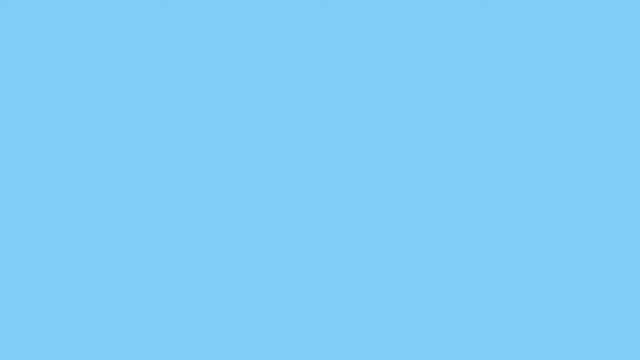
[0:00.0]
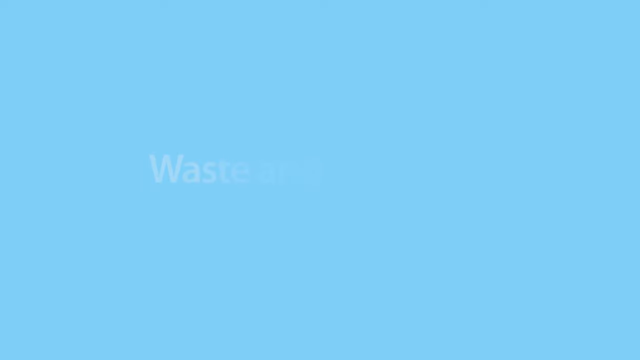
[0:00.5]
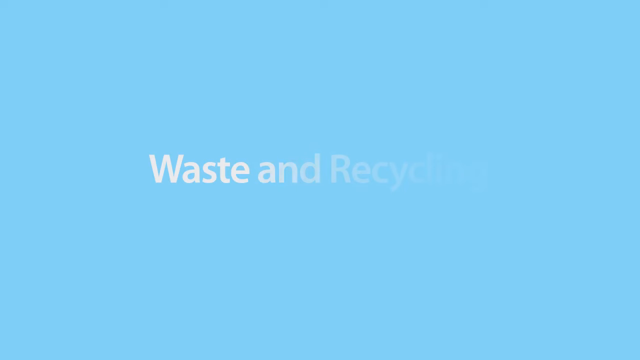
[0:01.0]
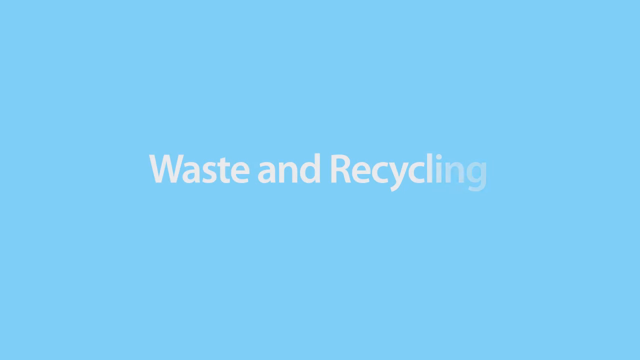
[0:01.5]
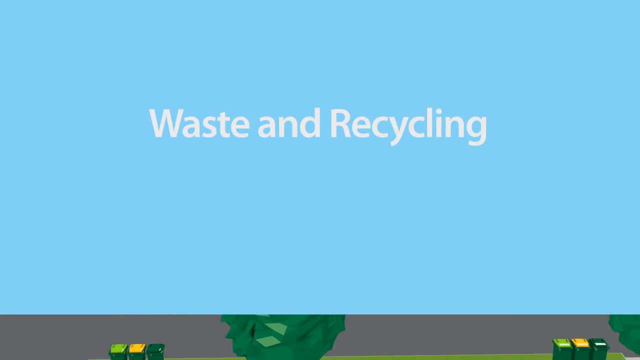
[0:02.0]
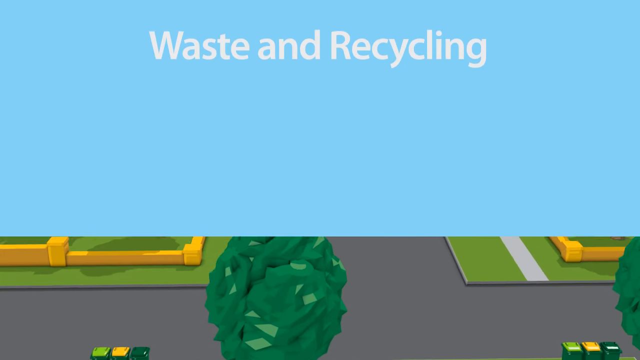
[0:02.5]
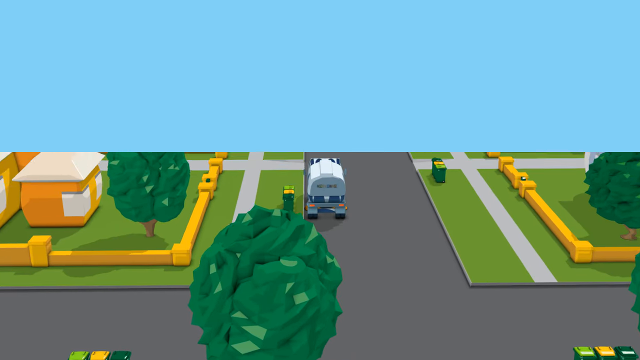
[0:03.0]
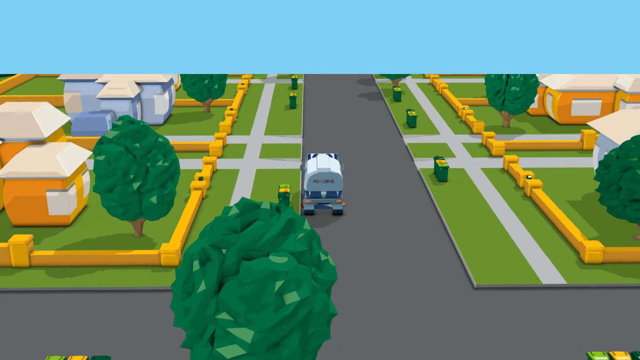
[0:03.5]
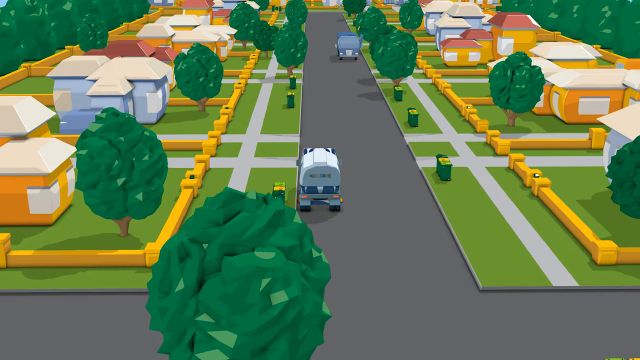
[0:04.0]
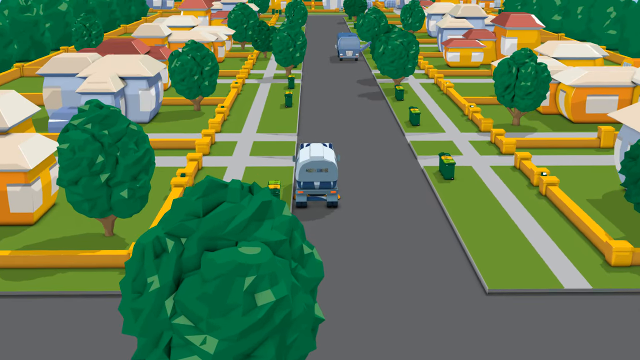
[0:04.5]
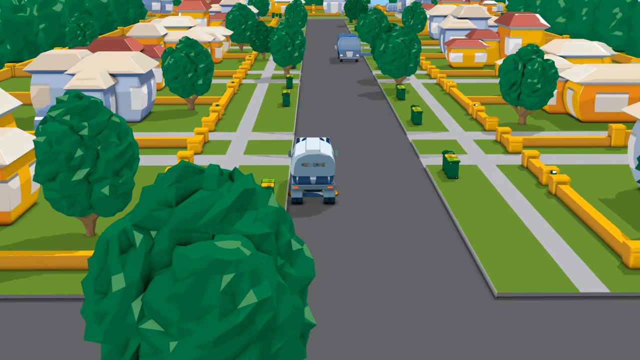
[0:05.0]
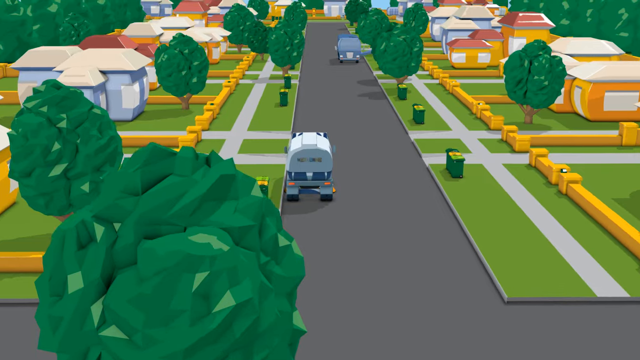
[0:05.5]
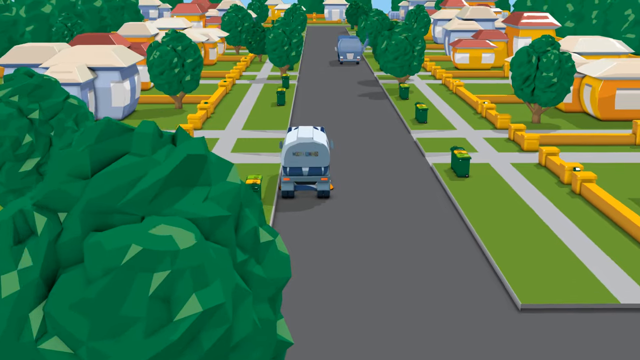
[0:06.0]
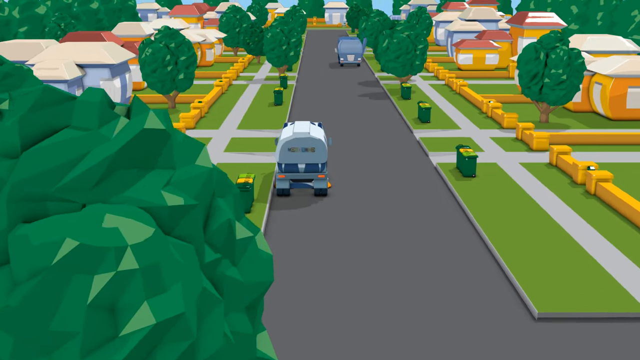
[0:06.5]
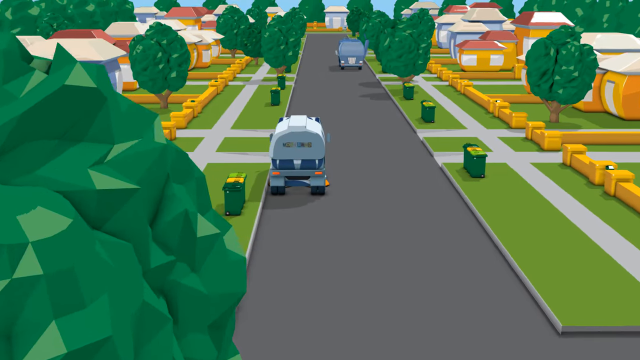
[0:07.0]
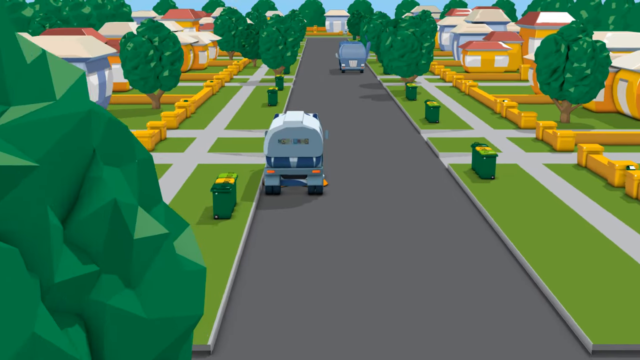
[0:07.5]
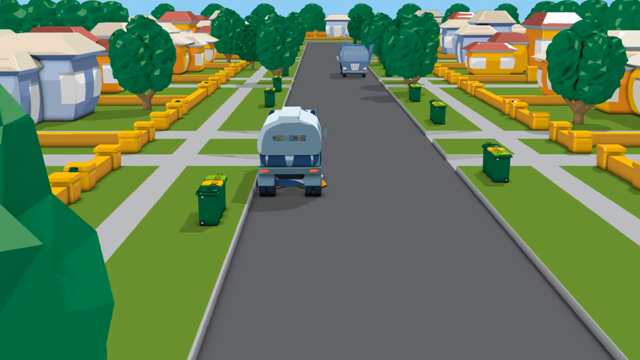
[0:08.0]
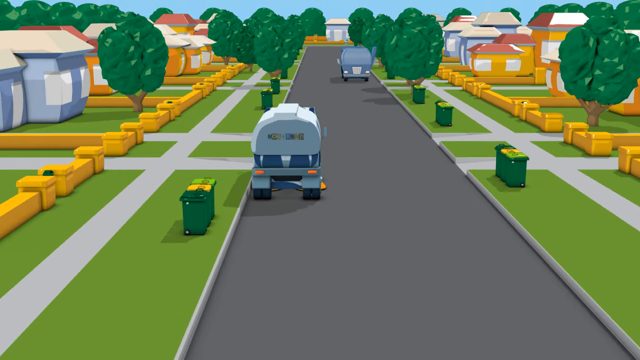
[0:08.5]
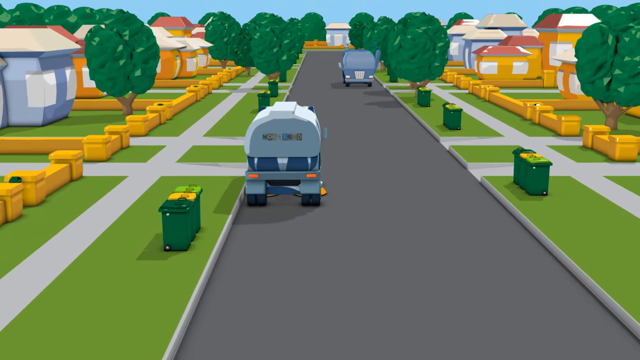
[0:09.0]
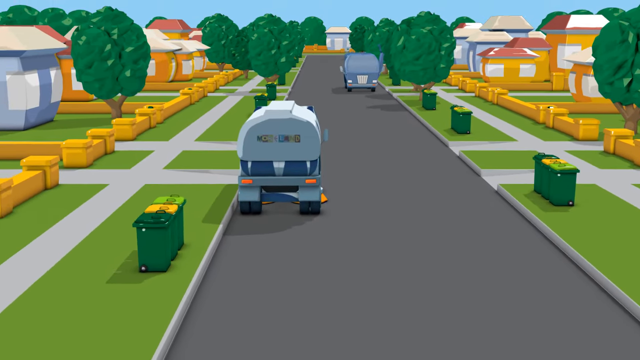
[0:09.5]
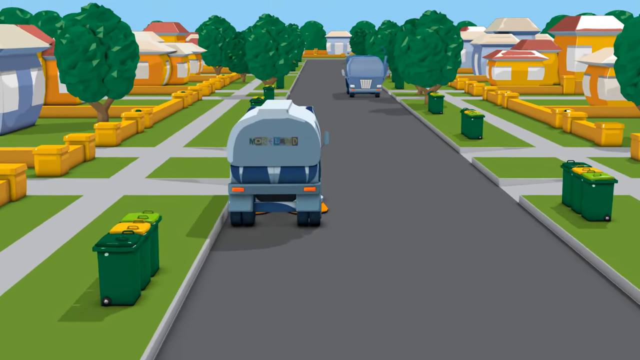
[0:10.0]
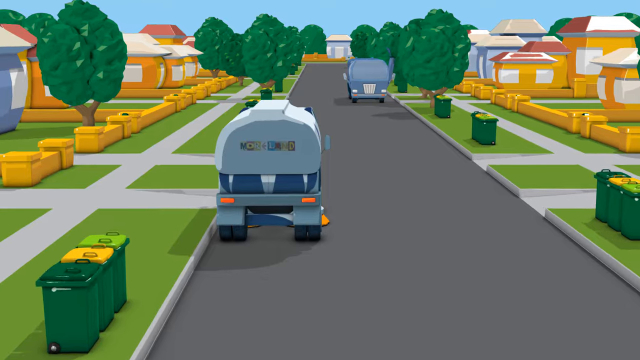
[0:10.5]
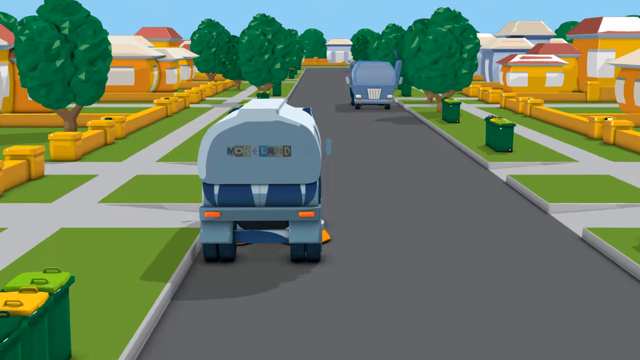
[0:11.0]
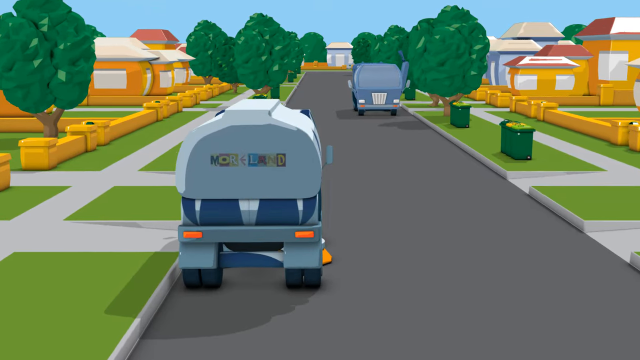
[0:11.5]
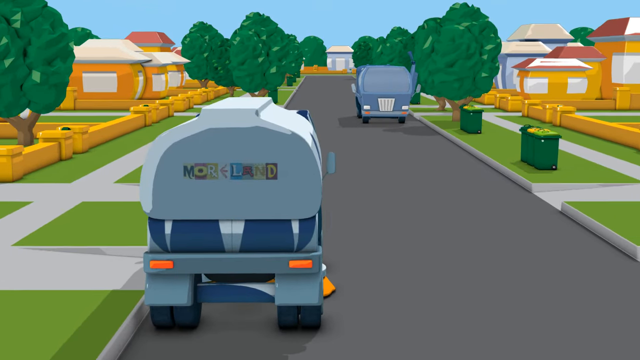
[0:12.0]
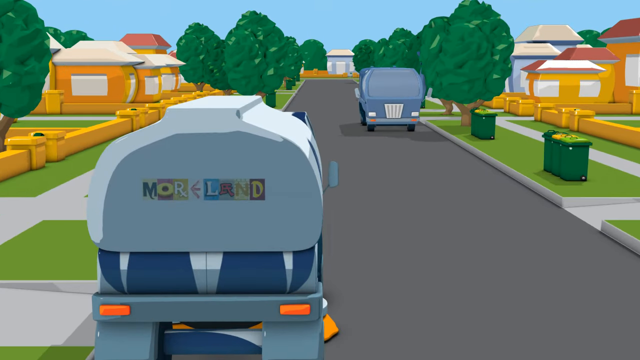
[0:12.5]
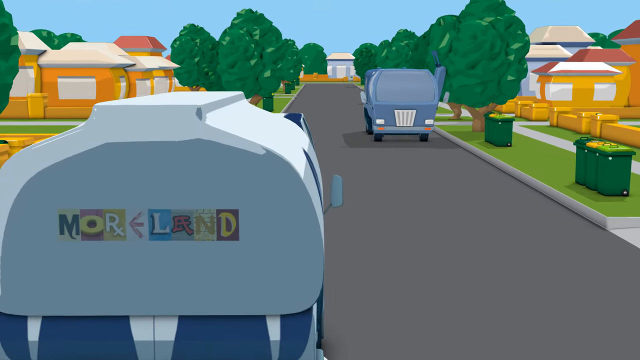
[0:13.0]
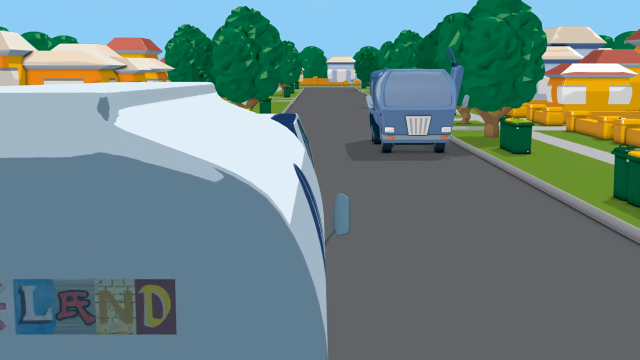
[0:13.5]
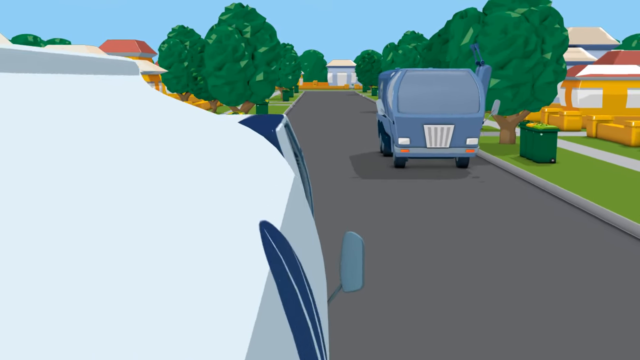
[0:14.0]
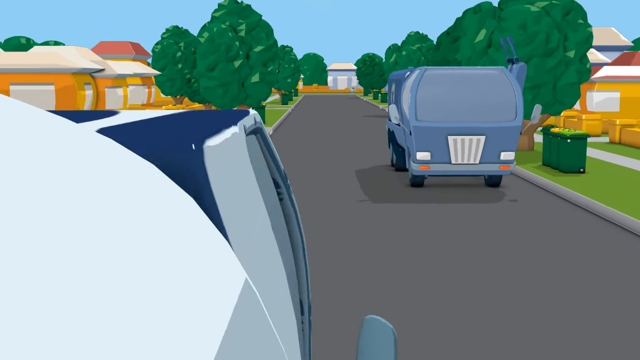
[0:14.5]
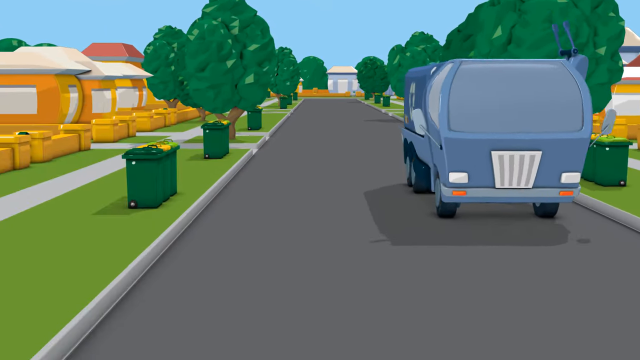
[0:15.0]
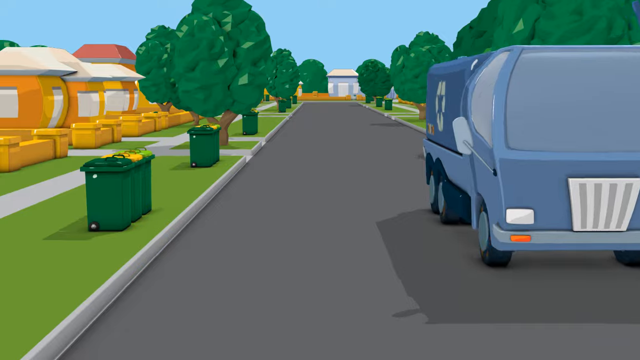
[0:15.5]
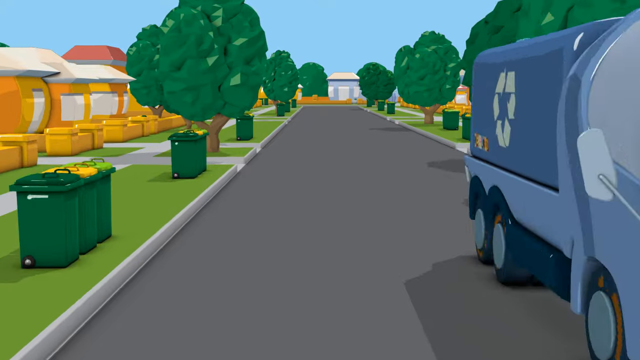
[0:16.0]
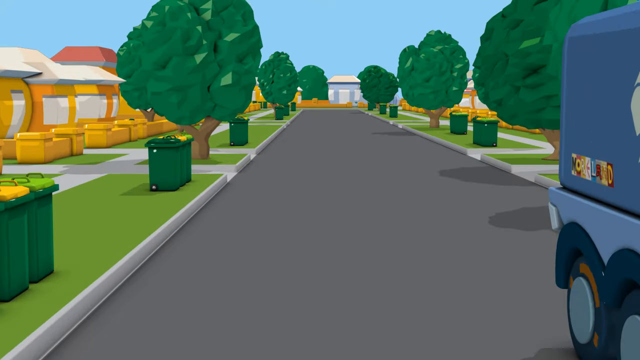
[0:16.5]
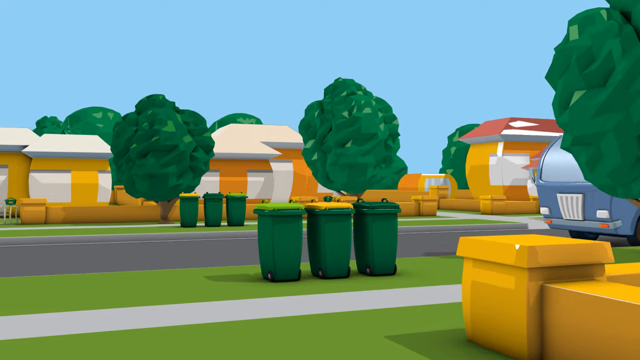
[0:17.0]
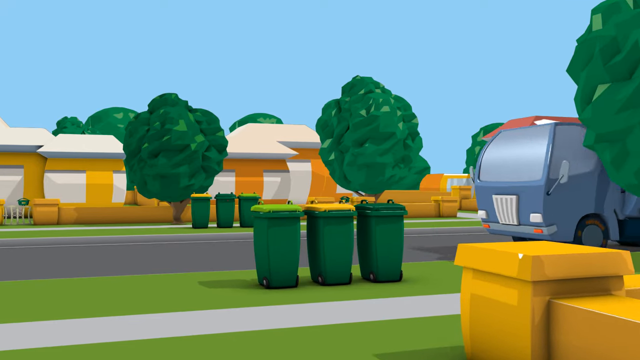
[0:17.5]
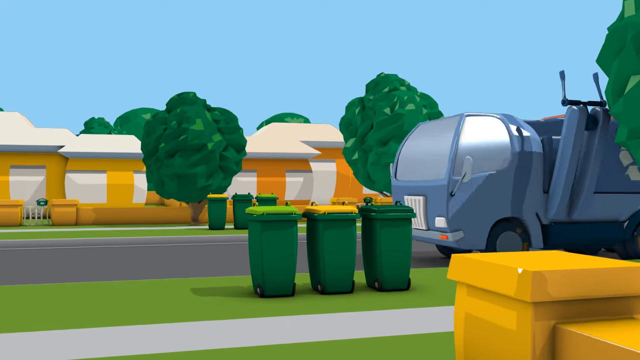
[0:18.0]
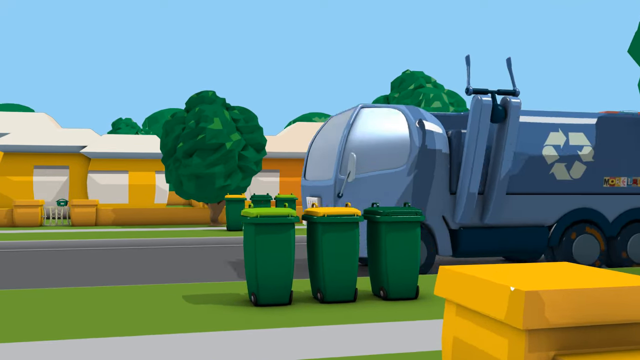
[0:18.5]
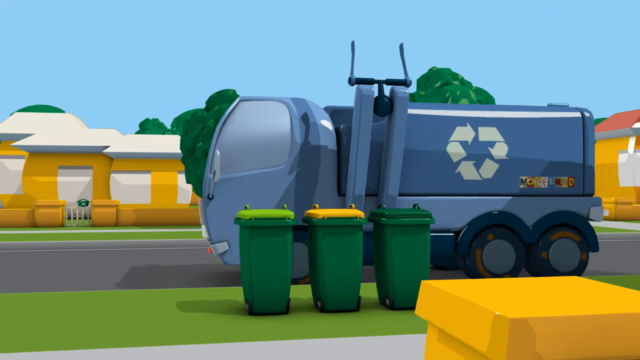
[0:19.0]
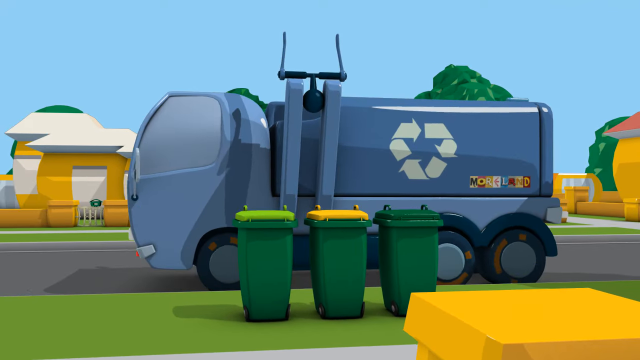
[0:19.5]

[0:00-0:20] The video opens on a light, sky-blue background that is black at the bottom. White lettering fades in reading "waste and recycling." An animated town follows, with a street down the middle and what look like garbage trucks, one on the left and one on the right. There are maybe five to ten houses on each side of the street, with trees on each property and what look like garbage or recycling cans near the sidewalk of each house. The camera zooms in toward the back of the first truck, which has a very colorful sign reading "Moreland," each letter on a background of a different color. The camera keeps zooming in, and the final shot is another side view of a truck.